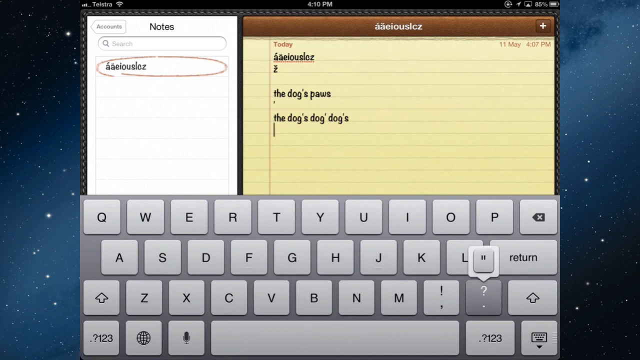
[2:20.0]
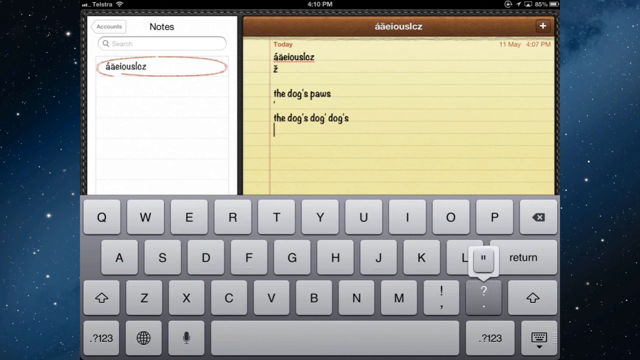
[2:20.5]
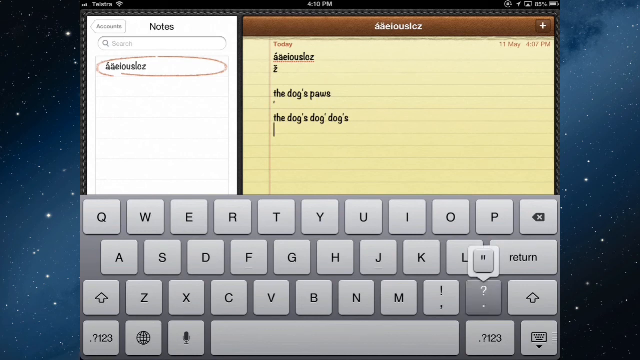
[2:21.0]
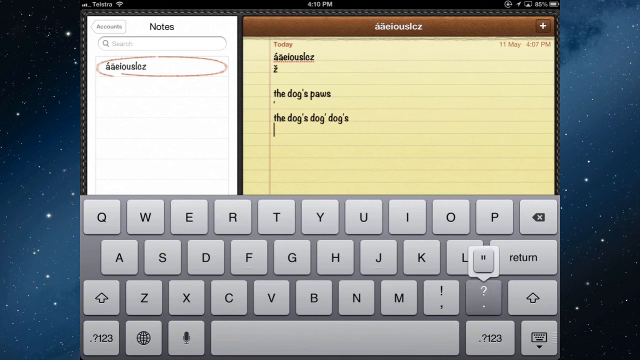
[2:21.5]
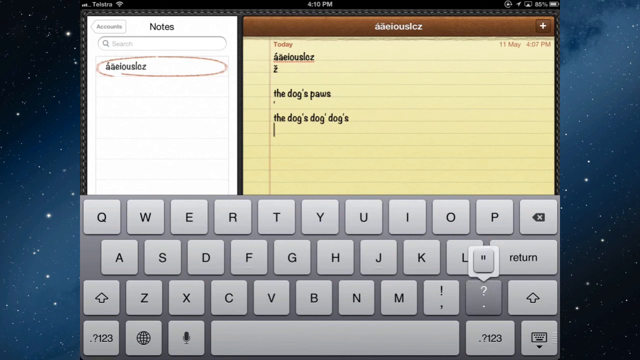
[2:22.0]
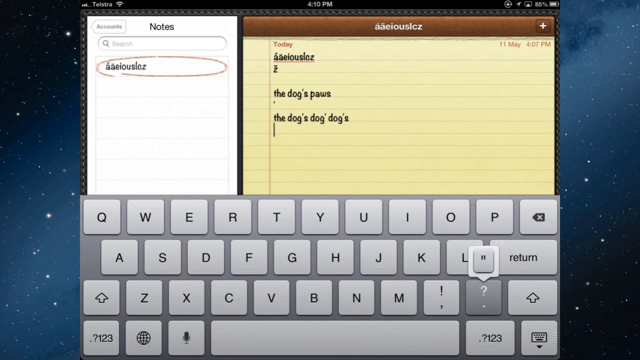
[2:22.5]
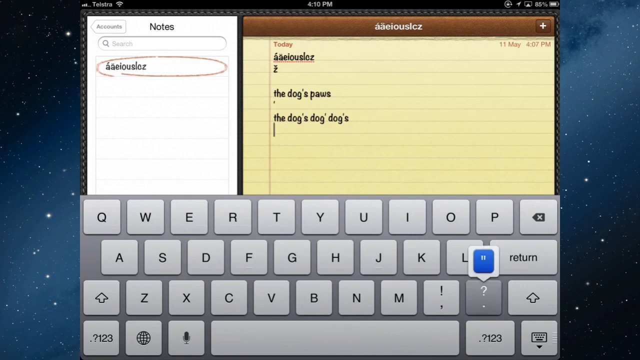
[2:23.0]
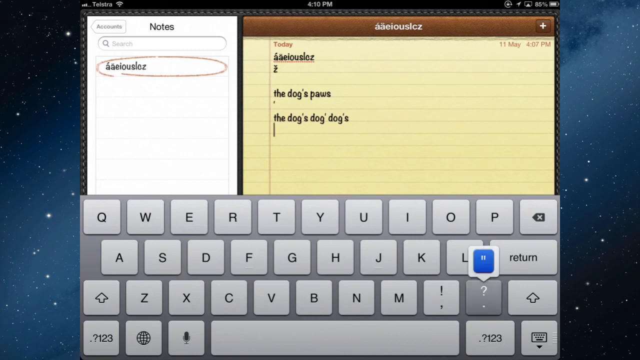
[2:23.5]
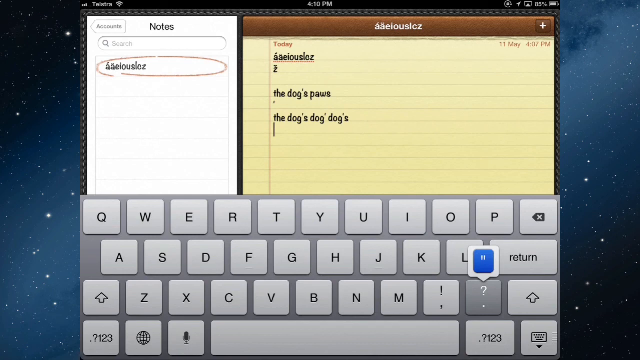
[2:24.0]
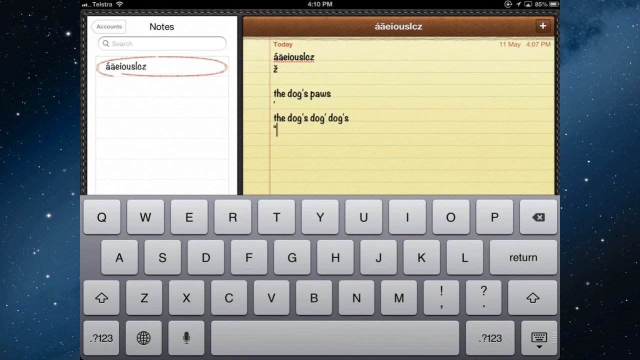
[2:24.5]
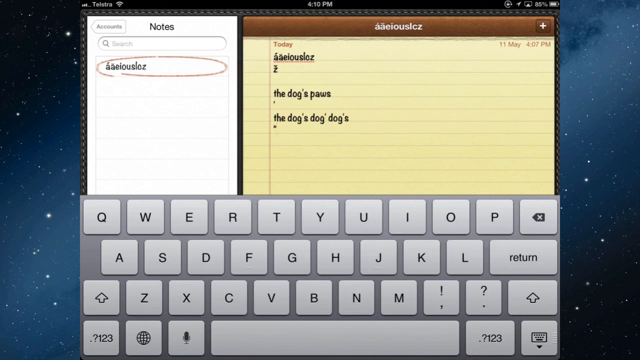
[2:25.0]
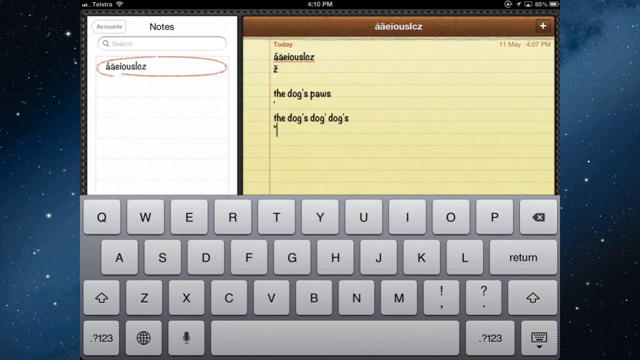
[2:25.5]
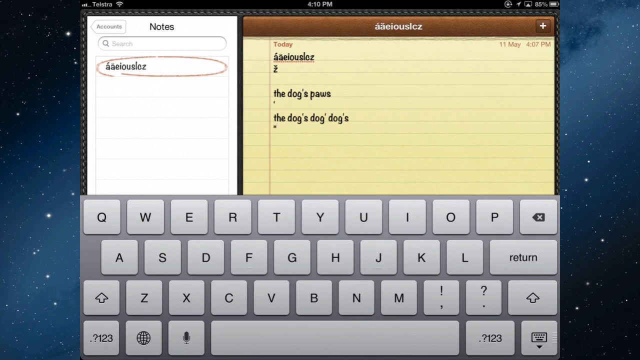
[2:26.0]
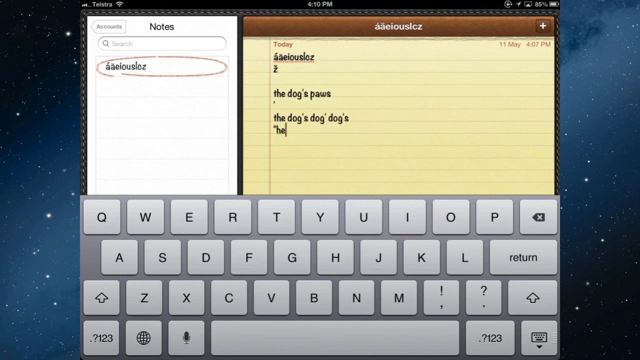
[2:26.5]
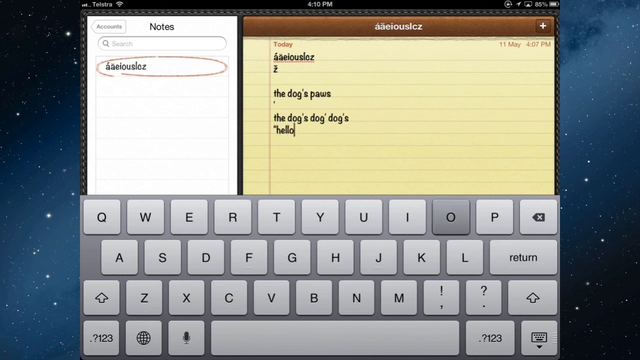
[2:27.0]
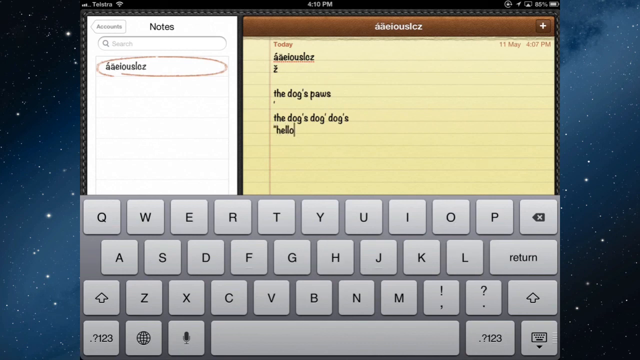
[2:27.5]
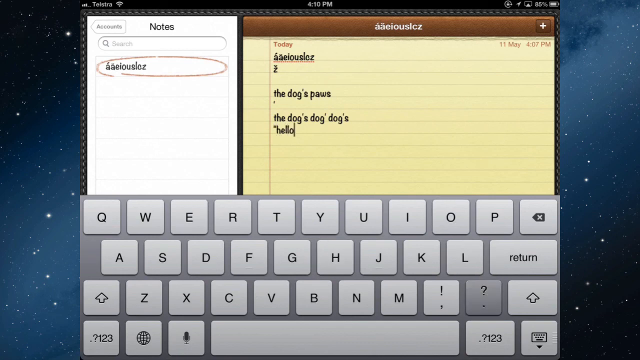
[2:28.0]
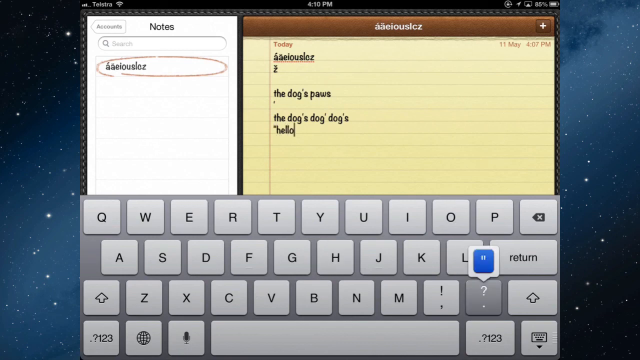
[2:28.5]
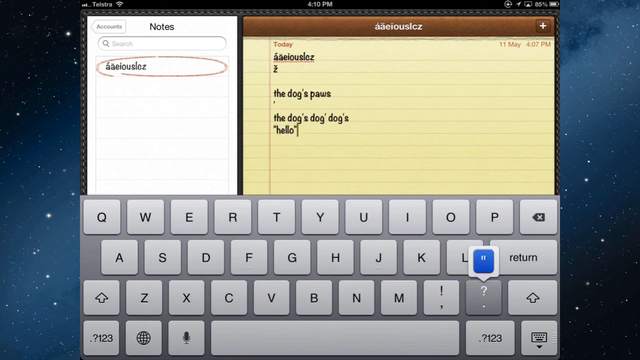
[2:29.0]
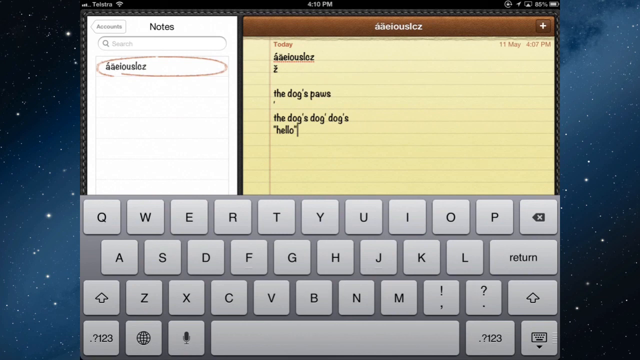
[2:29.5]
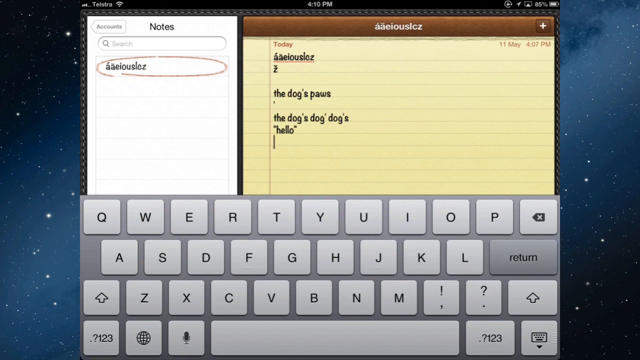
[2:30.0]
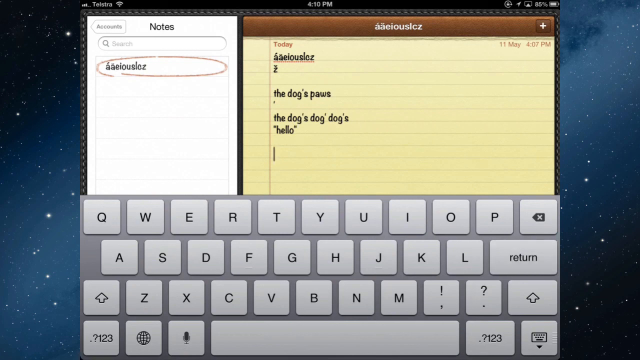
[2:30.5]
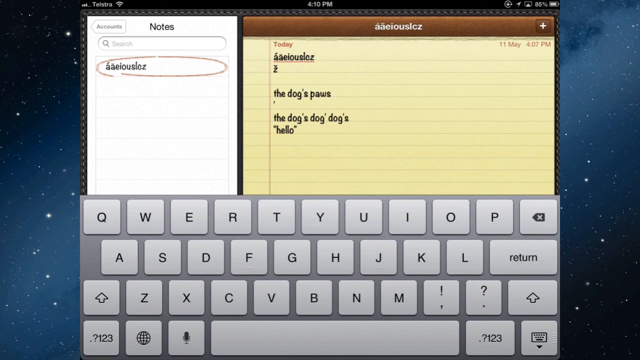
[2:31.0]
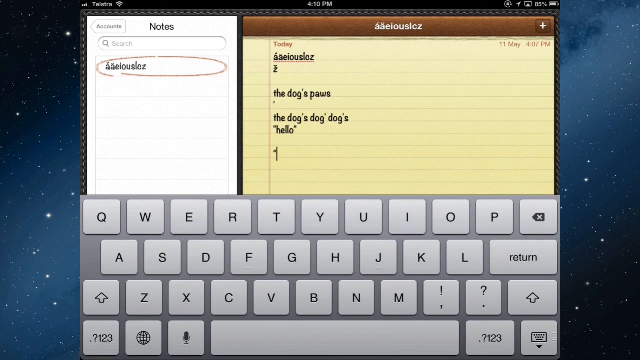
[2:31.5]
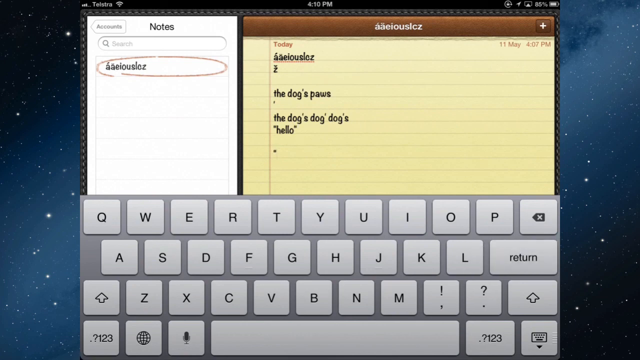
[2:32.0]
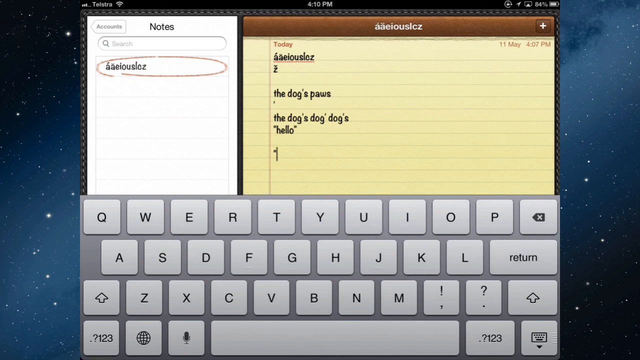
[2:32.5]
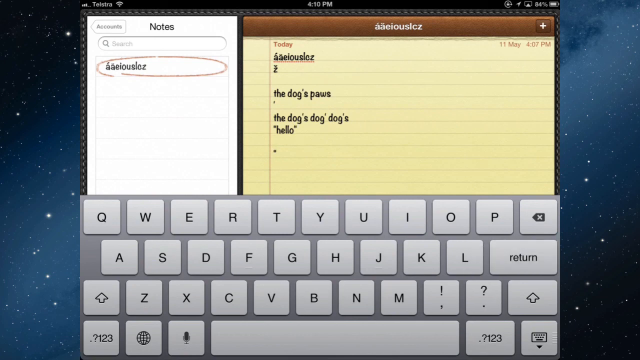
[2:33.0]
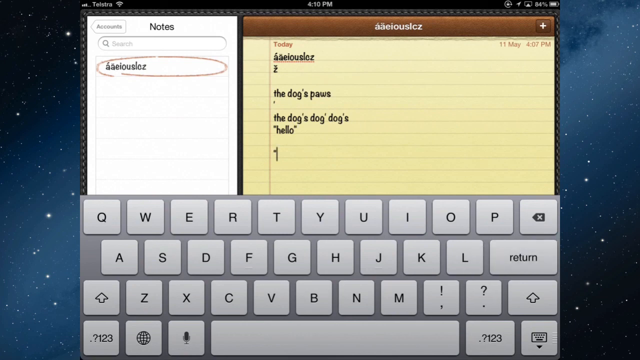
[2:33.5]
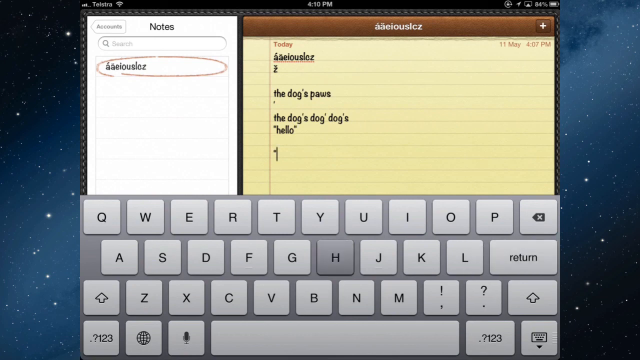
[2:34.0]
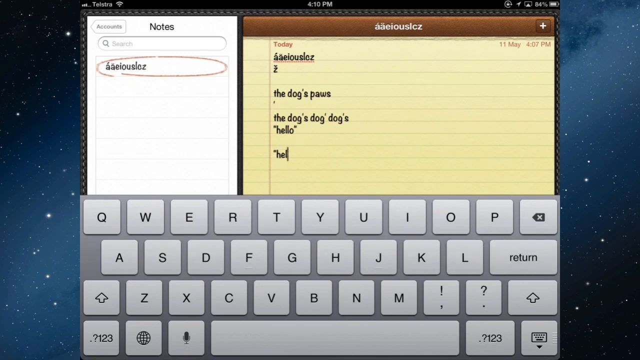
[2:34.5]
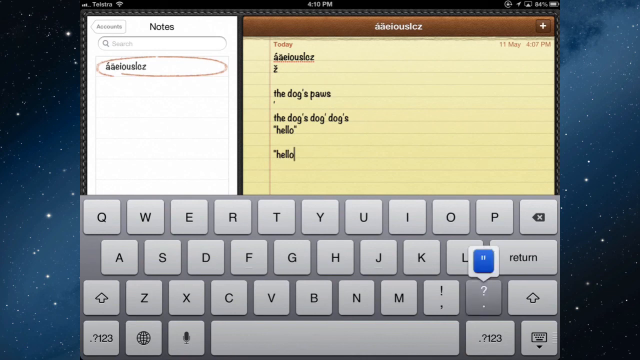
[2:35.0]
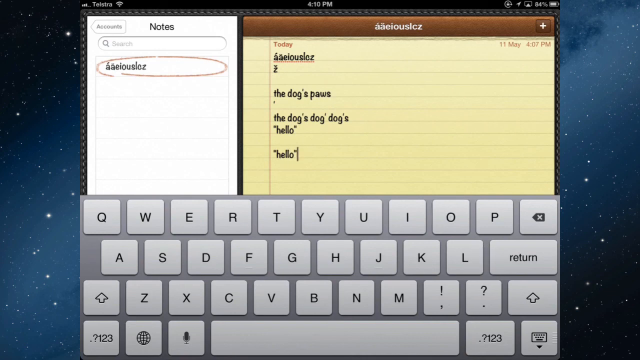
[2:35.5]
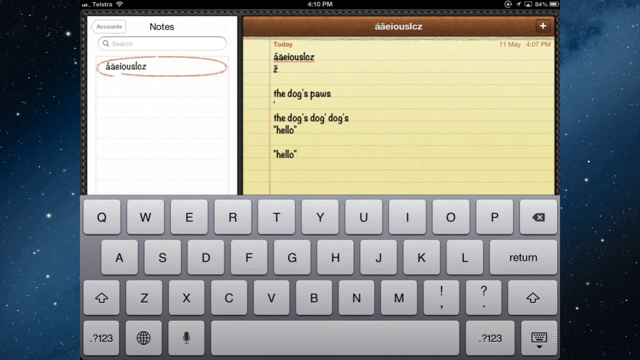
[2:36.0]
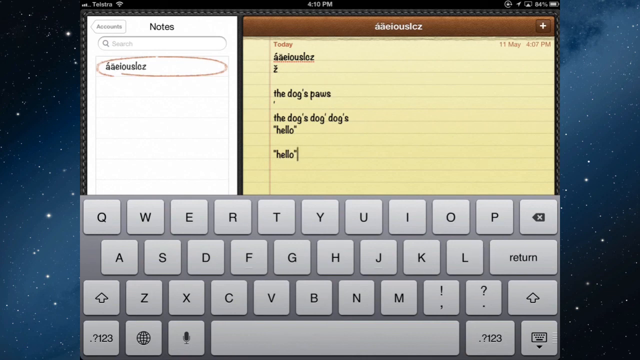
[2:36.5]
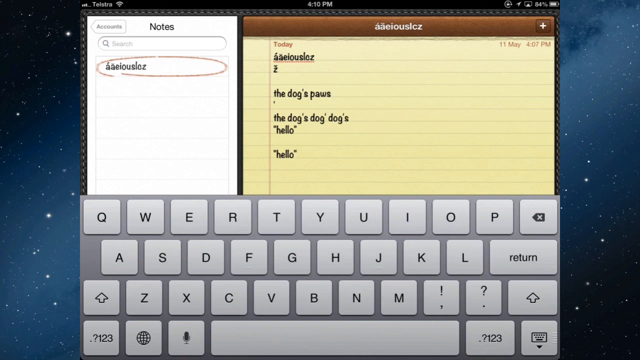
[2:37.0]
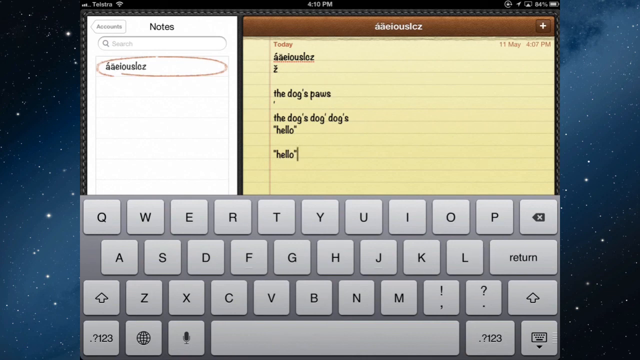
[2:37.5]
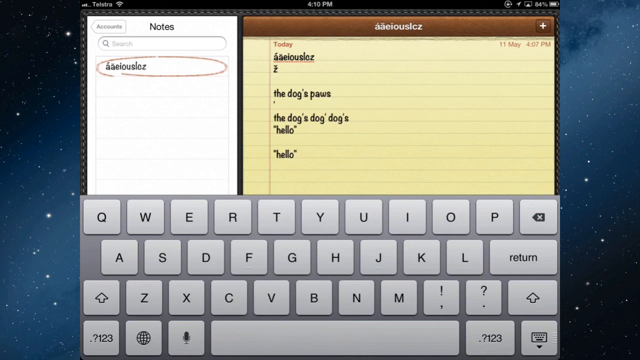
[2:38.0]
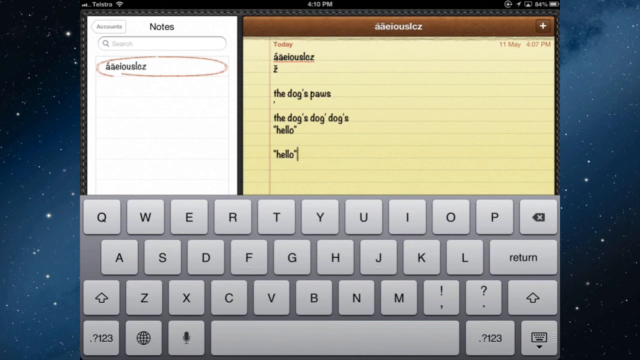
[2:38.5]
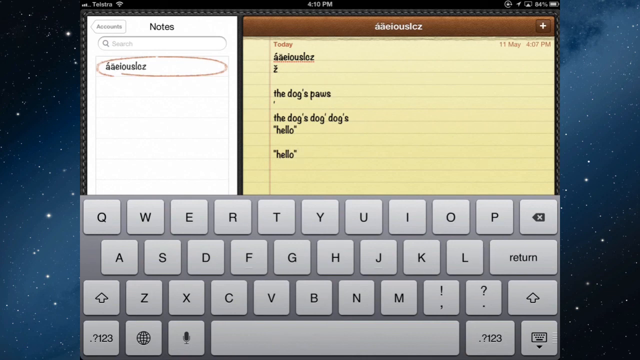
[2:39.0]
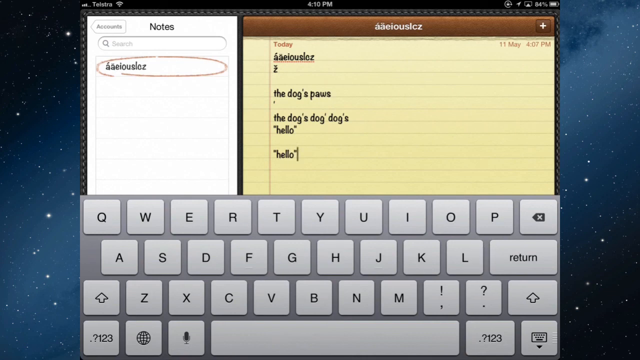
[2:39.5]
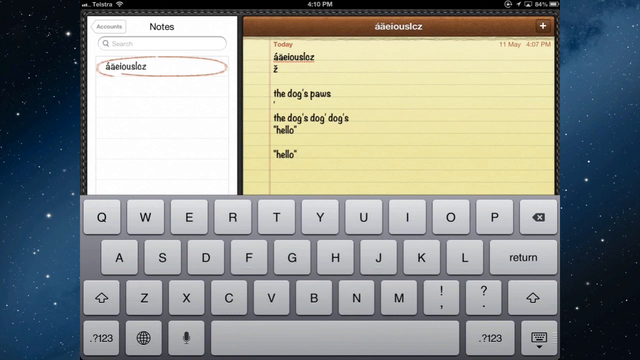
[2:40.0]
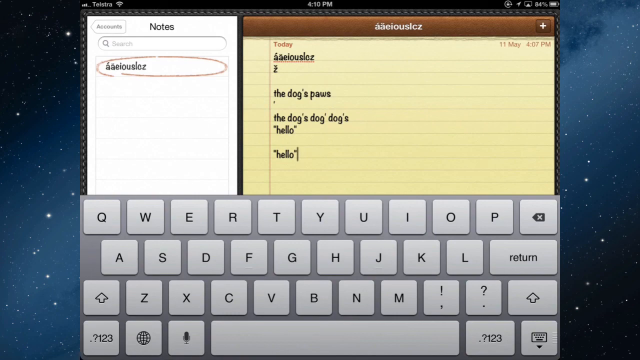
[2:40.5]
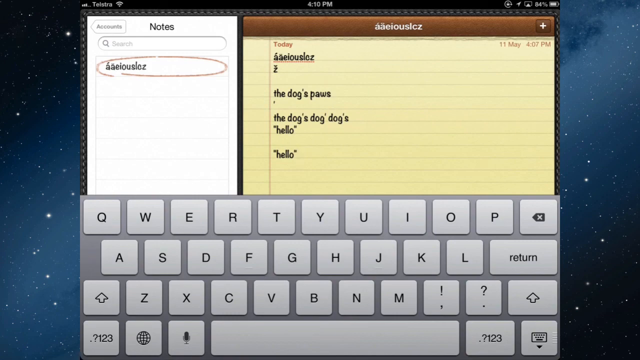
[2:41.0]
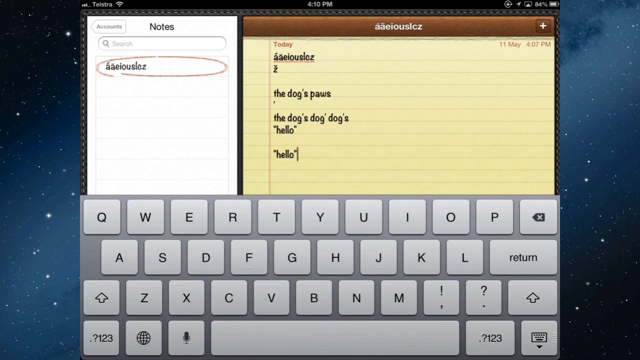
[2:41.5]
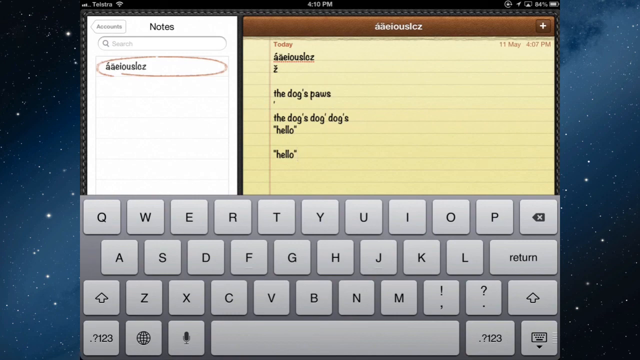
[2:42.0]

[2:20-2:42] A computer-generated notebook with yellow pages and a brown top border with white text on it is shown. On the left is another notepad with smaller, shorter white pages and a black header reading "notes," and a gray keyboard is underneath. The user seems to select the key with the question mark, and another key appears above it that turns from light gray to blue; as it turns blue, a quotation mark appears on the yellow notepad. The user types the word hello, and underneath types hello again in quotations. While typing, the light gray keys turn dark gray when selected. The date and time are visible at the top right of the yellow notepad.